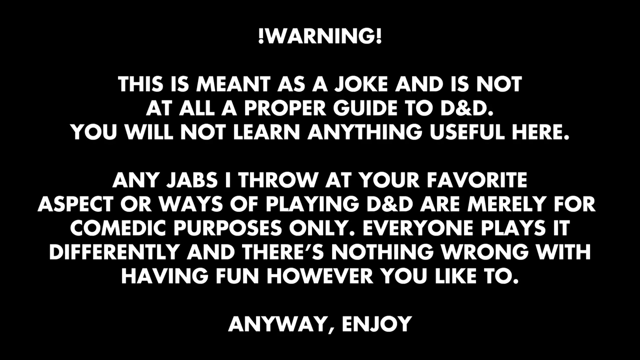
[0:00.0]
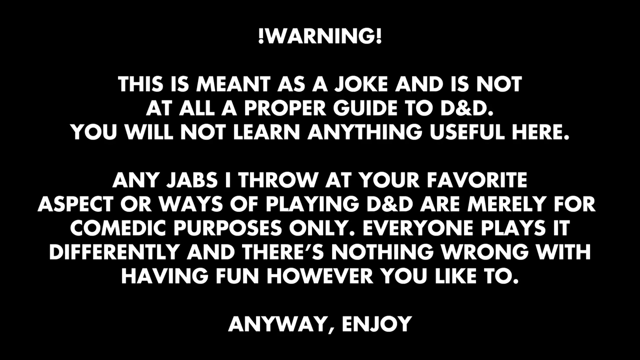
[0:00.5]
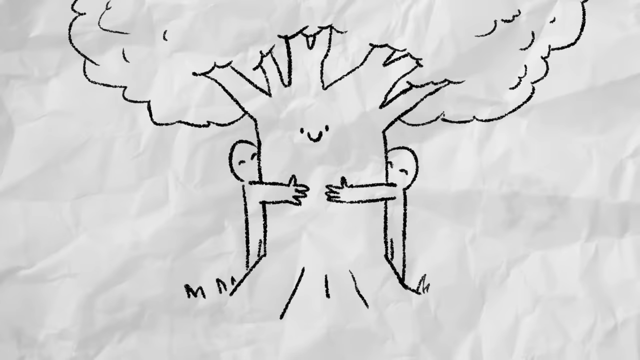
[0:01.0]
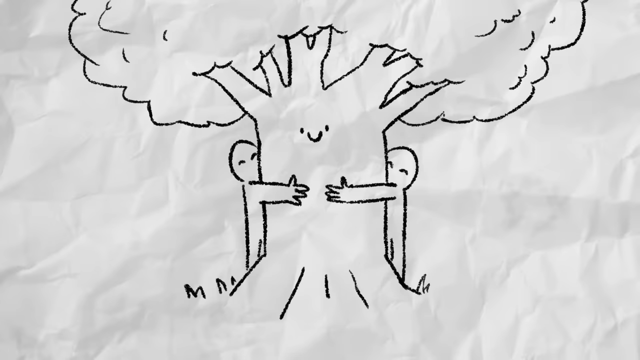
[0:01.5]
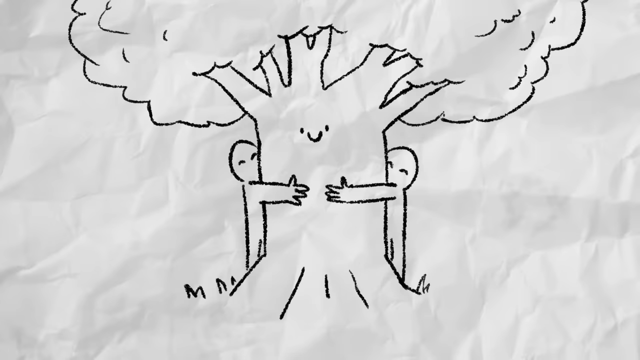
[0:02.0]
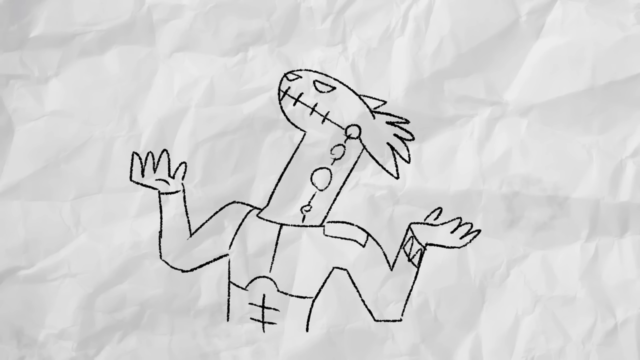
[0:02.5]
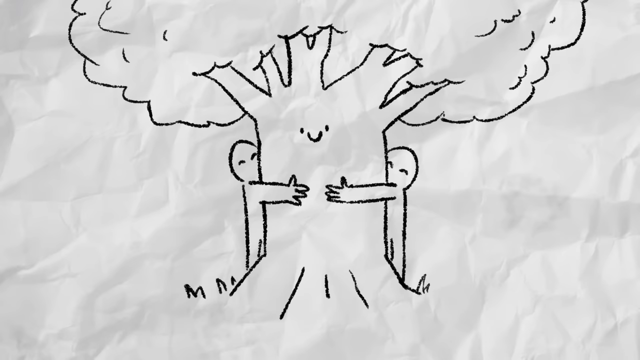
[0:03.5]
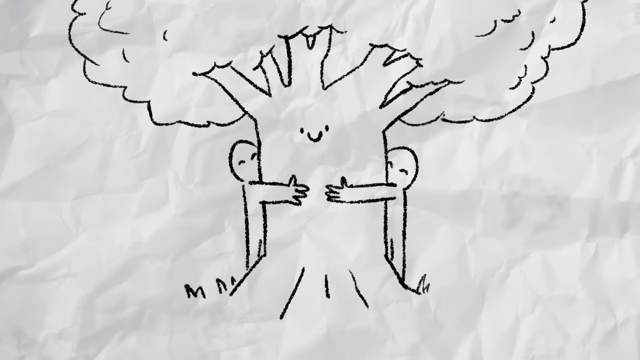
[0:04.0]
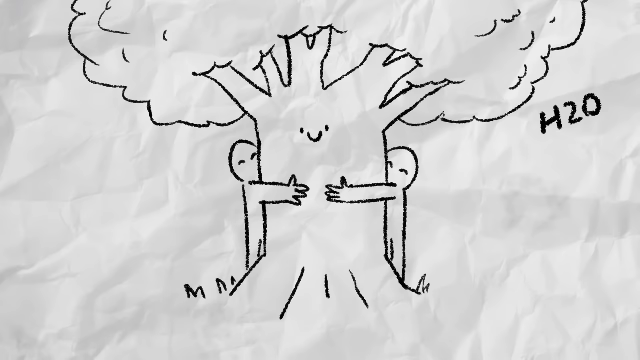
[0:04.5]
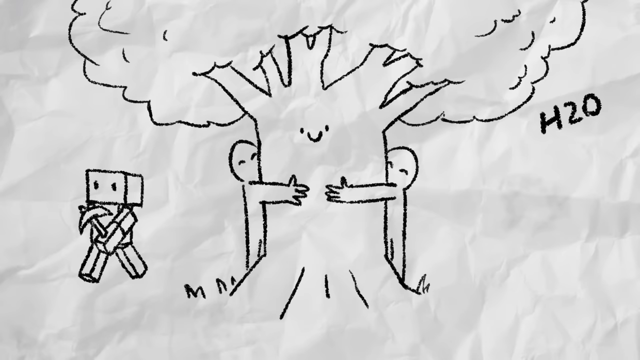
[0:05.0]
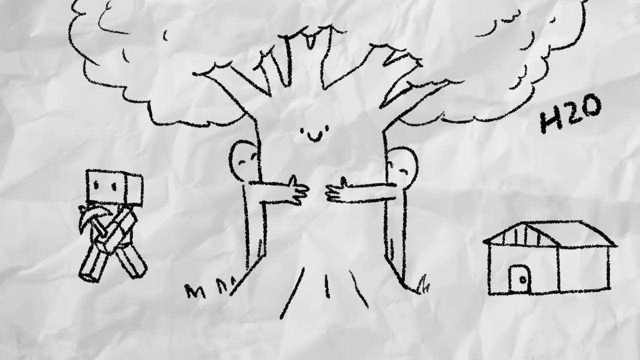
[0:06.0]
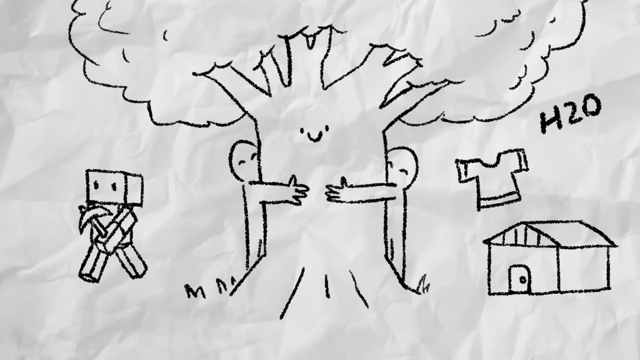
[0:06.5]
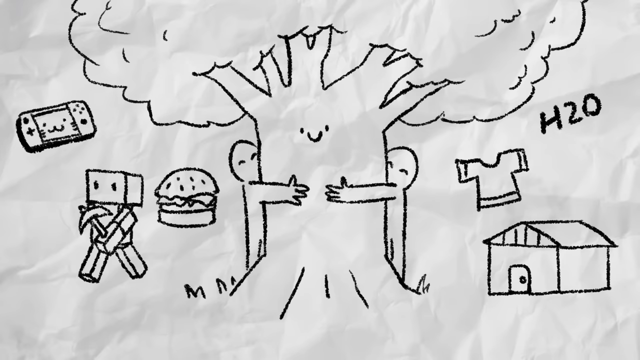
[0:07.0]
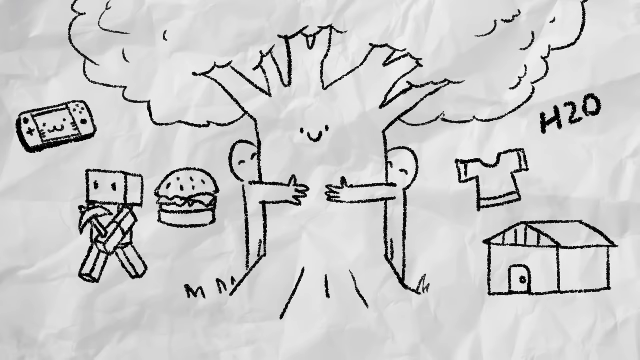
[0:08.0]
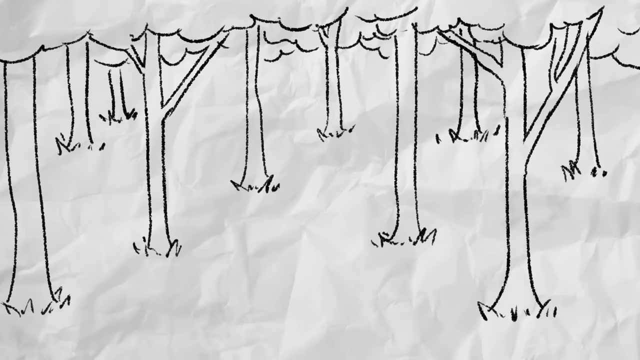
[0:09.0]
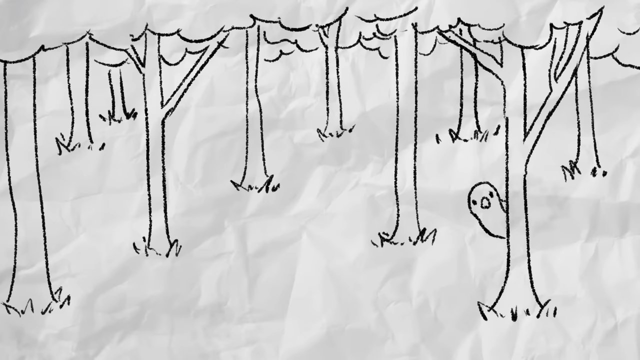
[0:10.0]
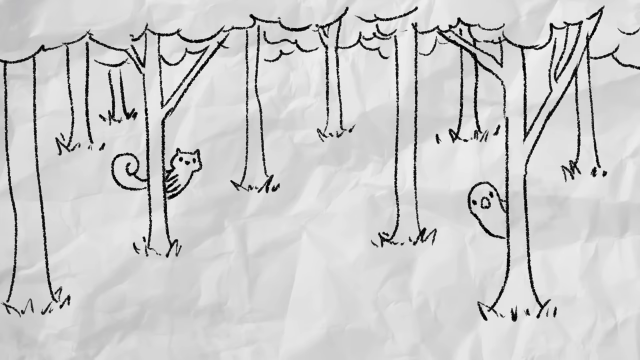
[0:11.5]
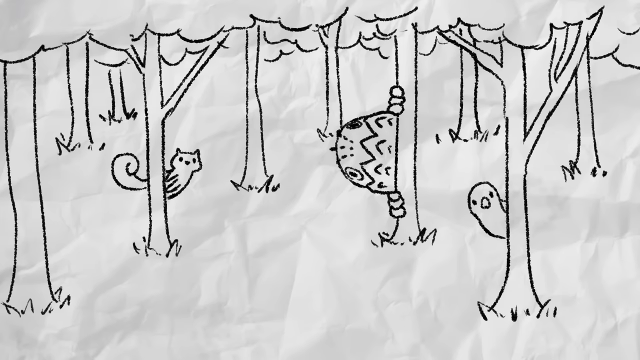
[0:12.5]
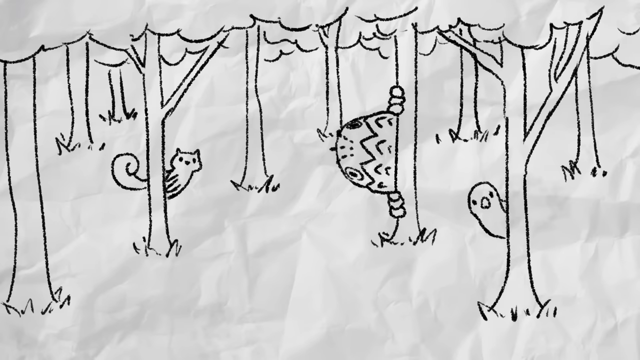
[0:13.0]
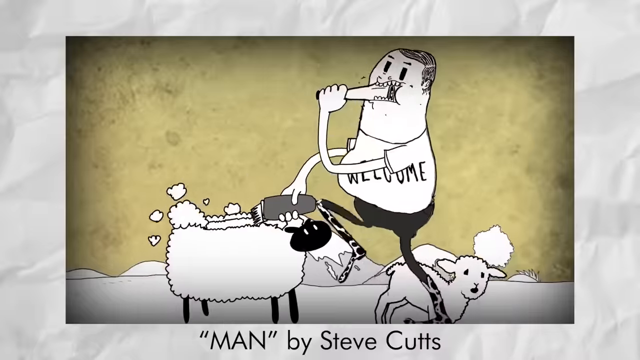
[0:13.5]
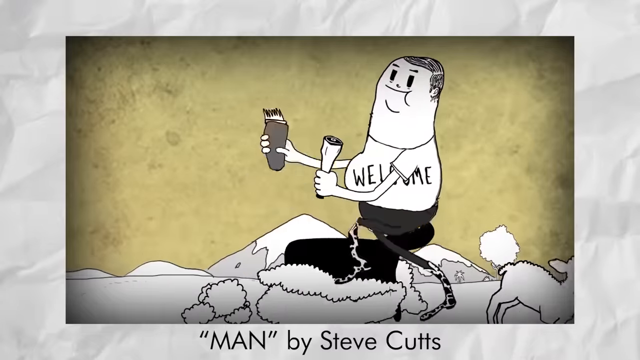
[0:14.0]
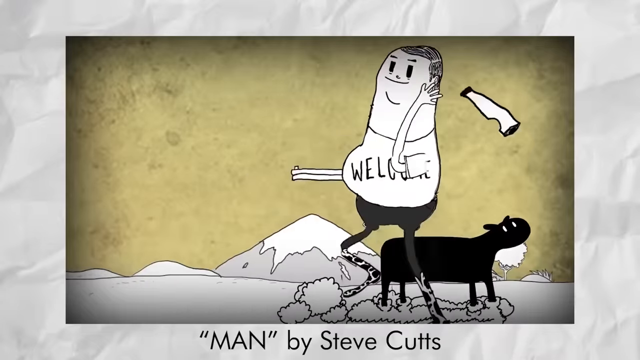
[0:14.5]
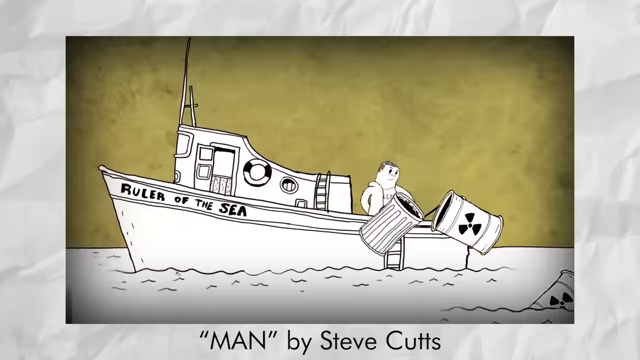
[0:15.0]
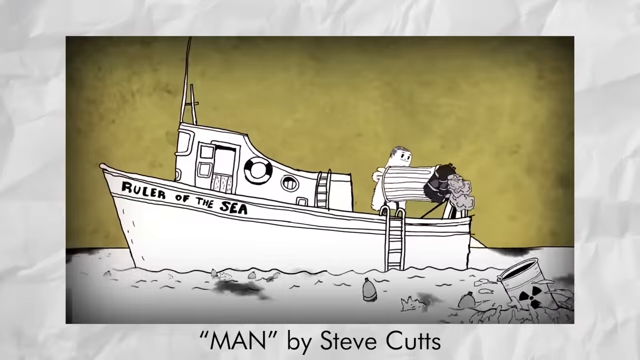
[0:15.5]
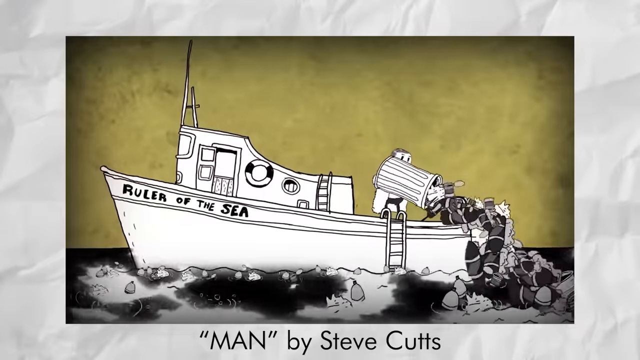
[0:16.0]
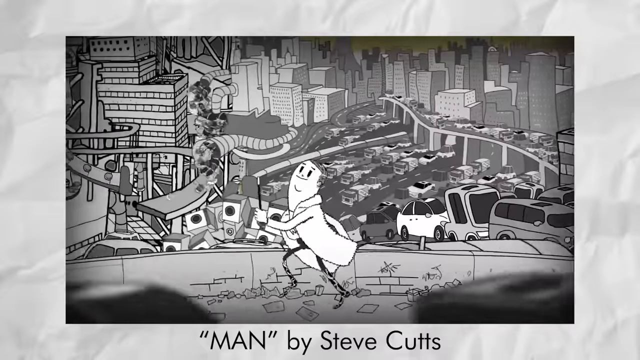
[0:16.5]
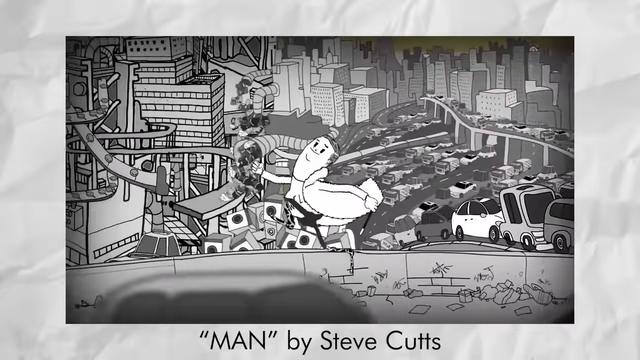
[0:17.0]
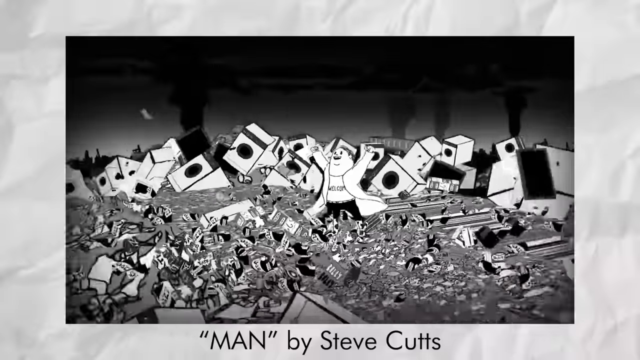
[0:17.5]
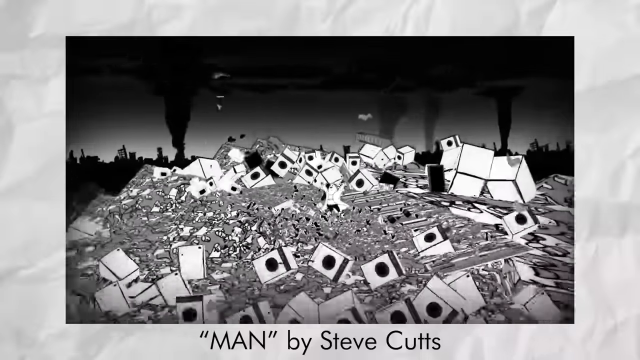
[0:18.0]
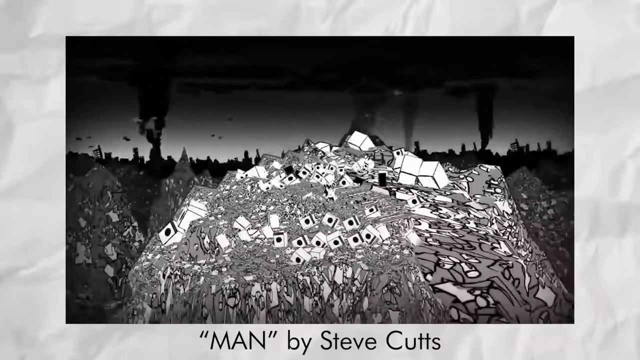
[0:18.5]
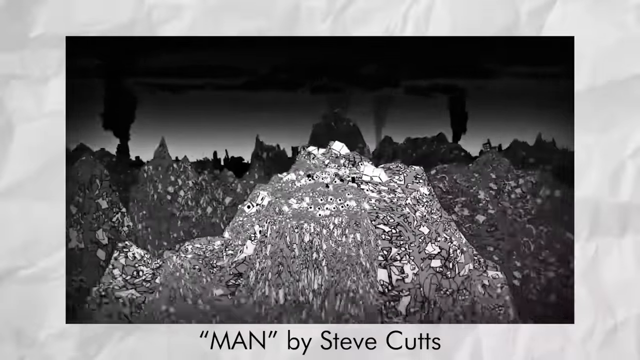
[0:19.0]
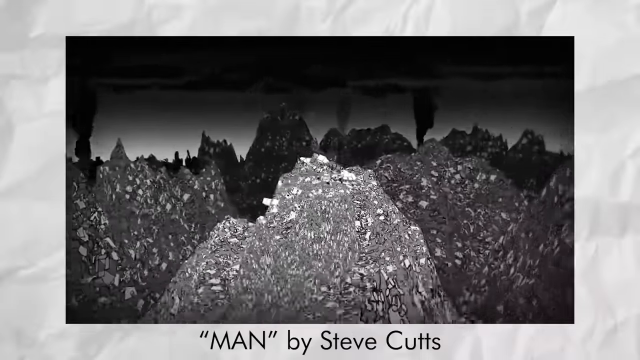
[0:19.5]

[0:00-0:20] A black and white animation that seems to focus on pollution and protecting the environment begins with a title card that says, "Warning, This is meant as a joke and is not at all a proper guide to D&D. You will not learn anything useful here. Any jabs I throw at your favorite aspect or ways of playing D&D are merely for comedic purposes only. Everyone plays it differently and there's nothing wrong with having fun however you like to. Anyway, enjoy." A series of what look like pencil drawings of trees and a forest follows, including one of two people hugging a tree as different items appear around them: a hamburger, a smartphone, a shirt, and a doghouse. A forest with a squirrel and a bird appears. Next, a human walks through a forest firing a gun, and then stands on a boat throwing waste into the ocean. He skips along a highway, and then stands on a pile of garbage as smoke comes out of smokestacks in the background. The camera pulls away to show multiple piles of garbage that look like mountains.